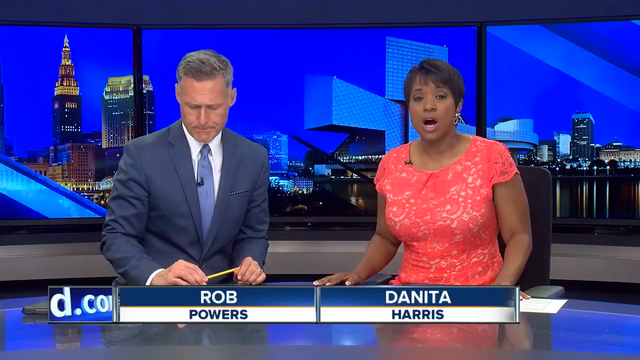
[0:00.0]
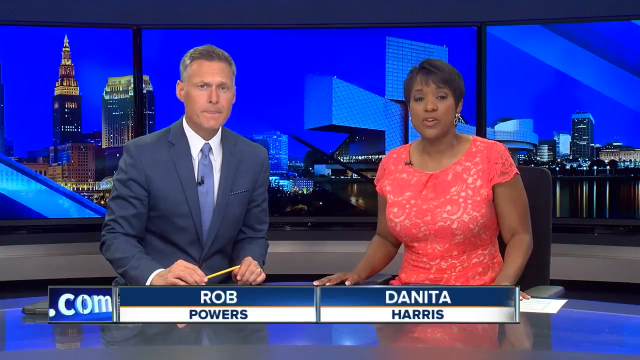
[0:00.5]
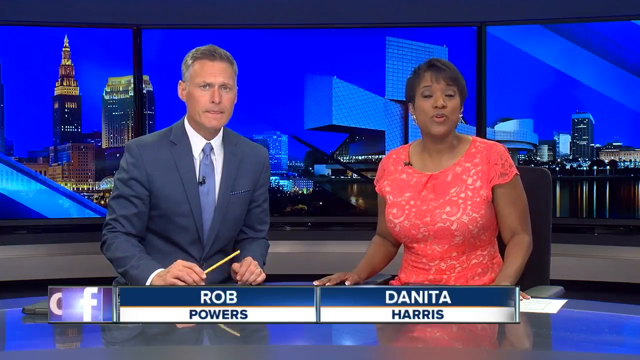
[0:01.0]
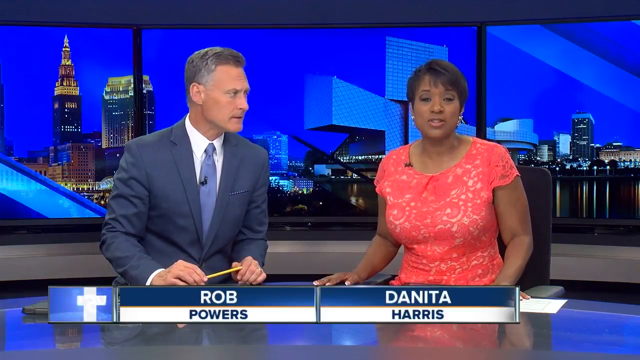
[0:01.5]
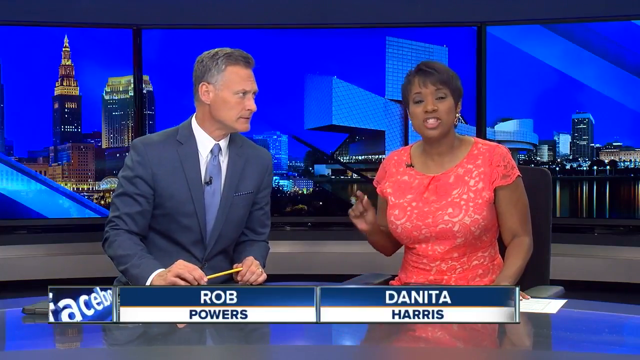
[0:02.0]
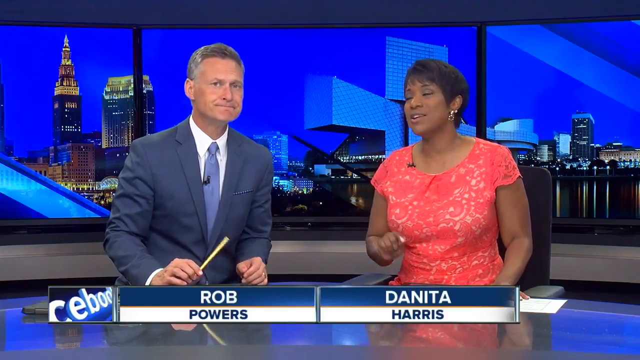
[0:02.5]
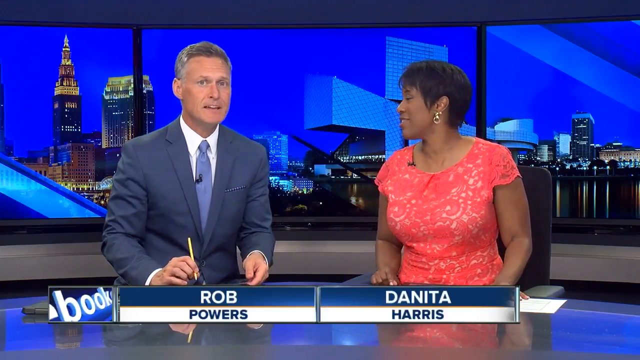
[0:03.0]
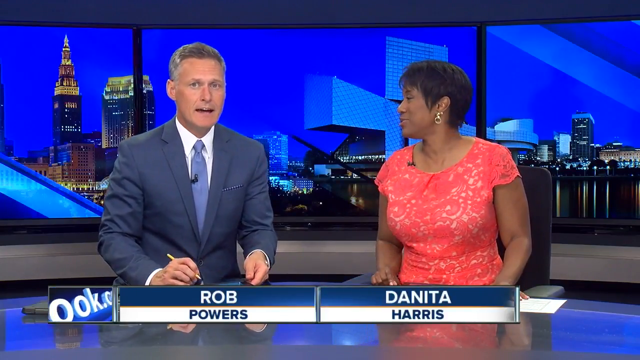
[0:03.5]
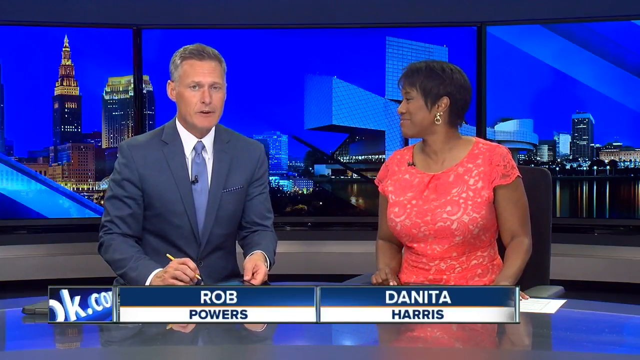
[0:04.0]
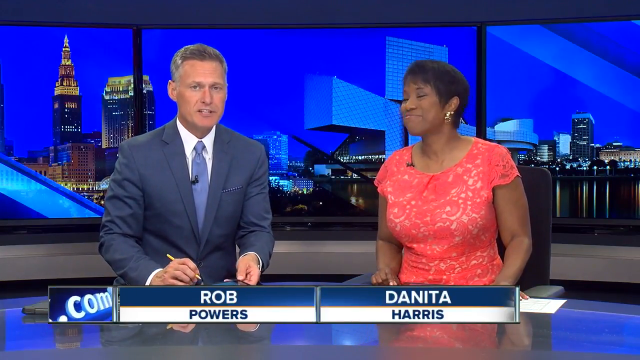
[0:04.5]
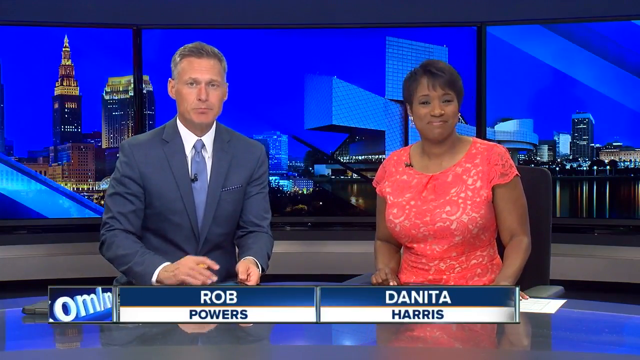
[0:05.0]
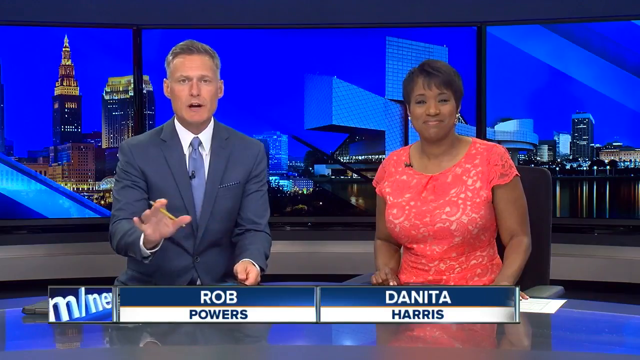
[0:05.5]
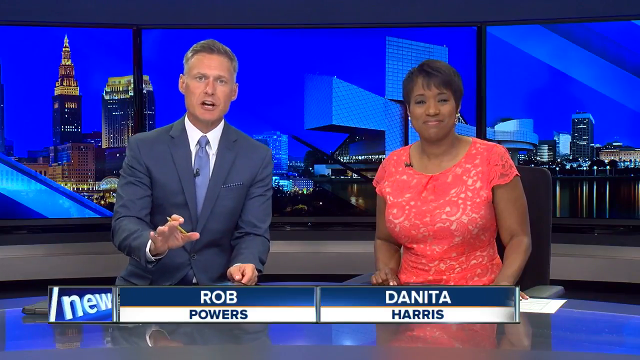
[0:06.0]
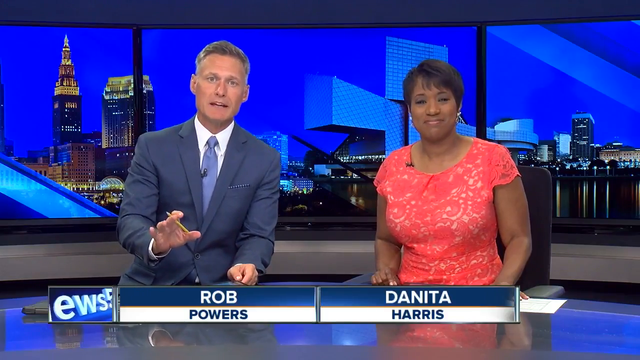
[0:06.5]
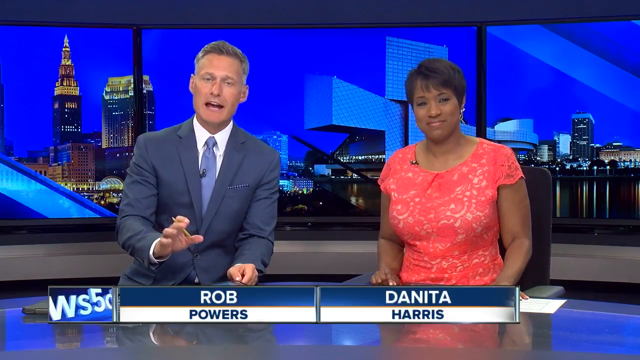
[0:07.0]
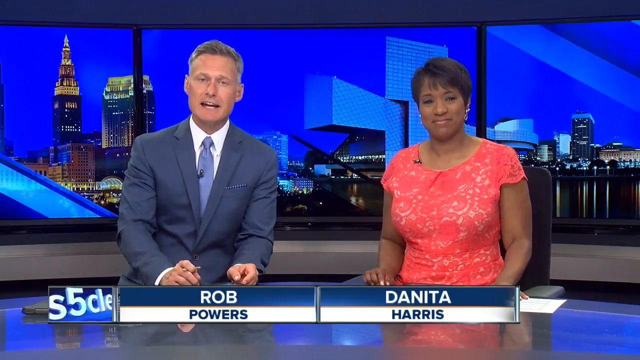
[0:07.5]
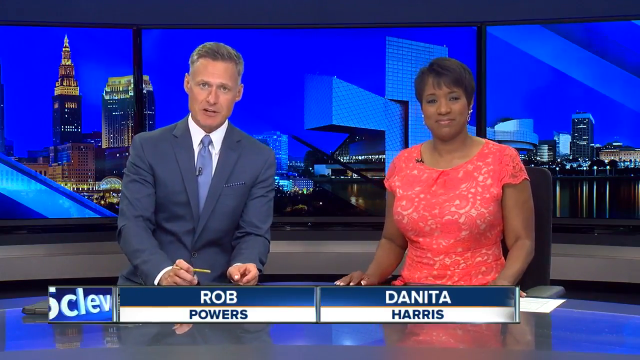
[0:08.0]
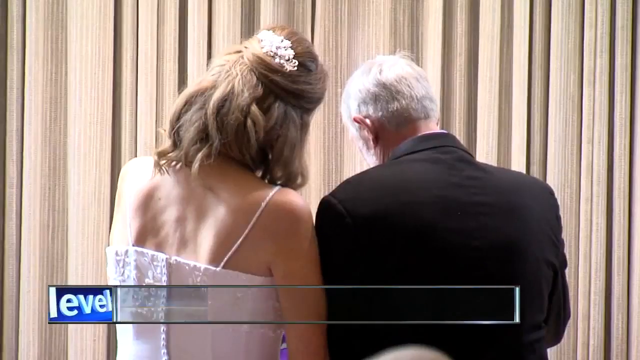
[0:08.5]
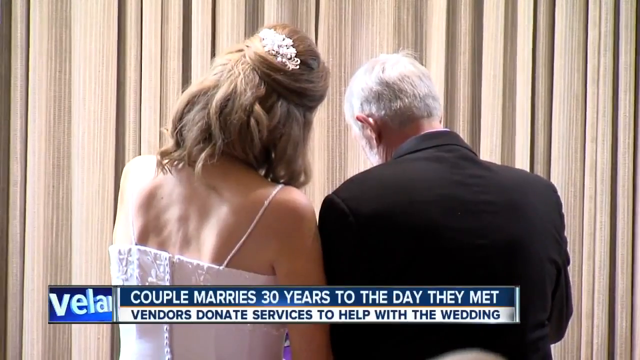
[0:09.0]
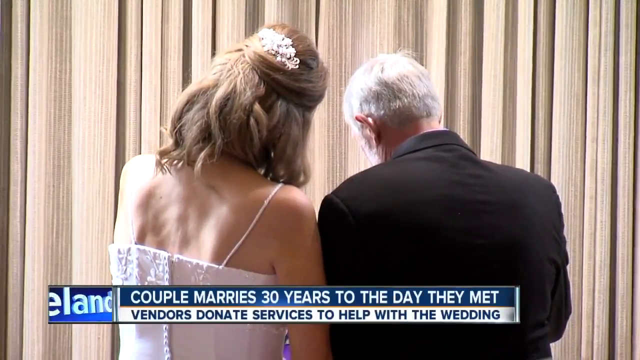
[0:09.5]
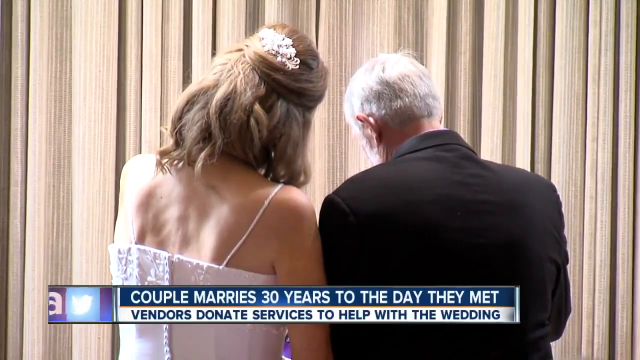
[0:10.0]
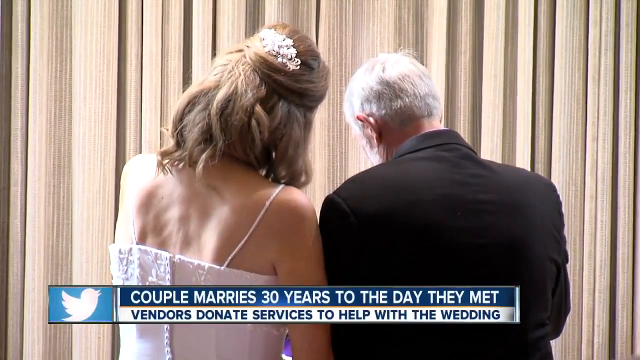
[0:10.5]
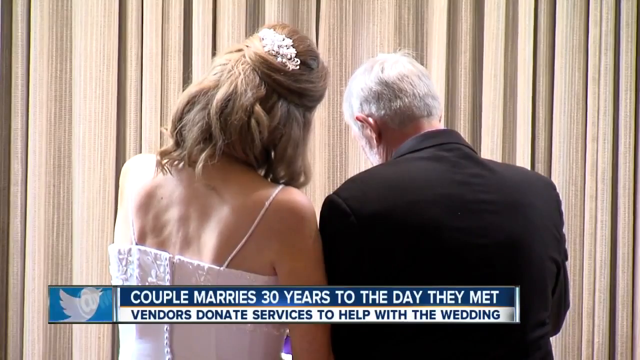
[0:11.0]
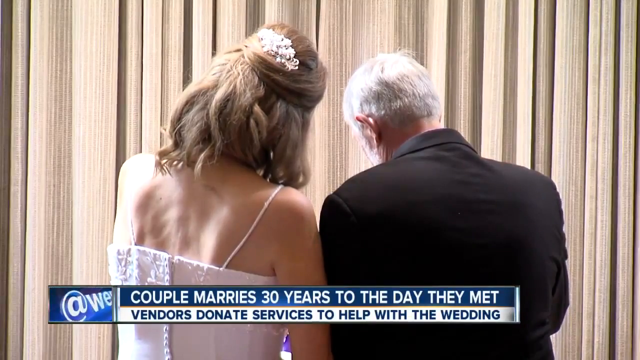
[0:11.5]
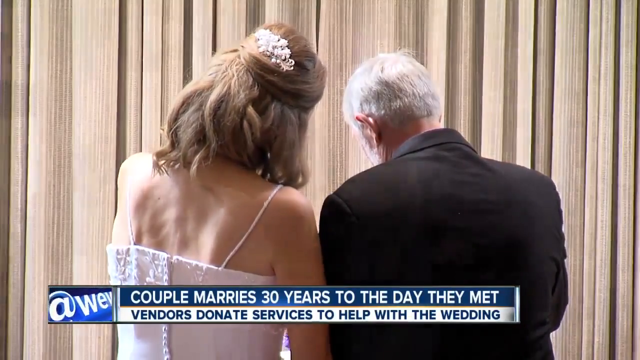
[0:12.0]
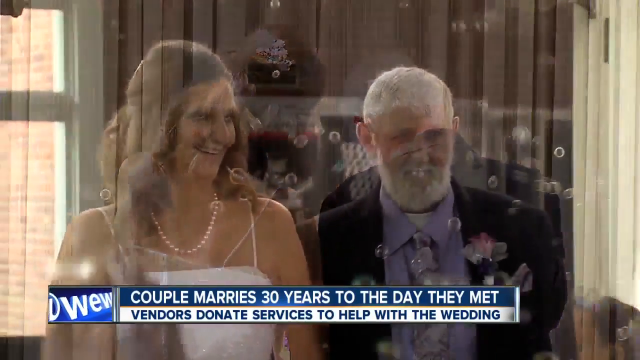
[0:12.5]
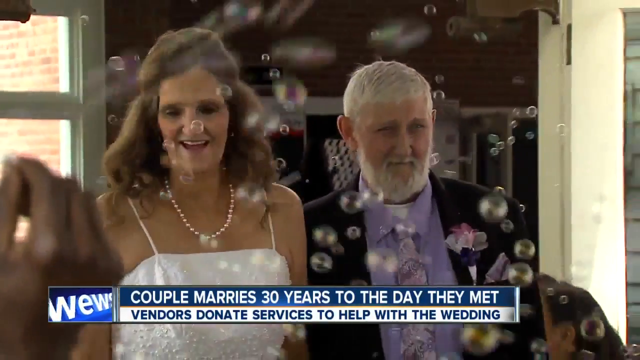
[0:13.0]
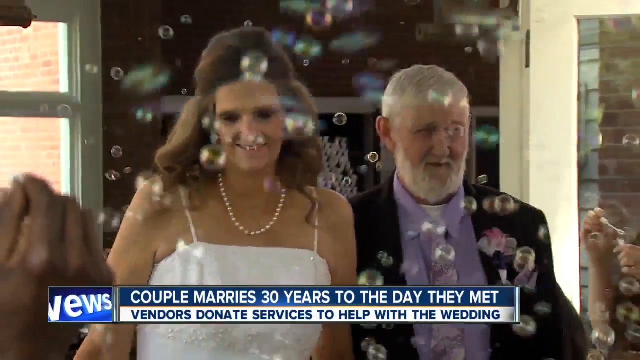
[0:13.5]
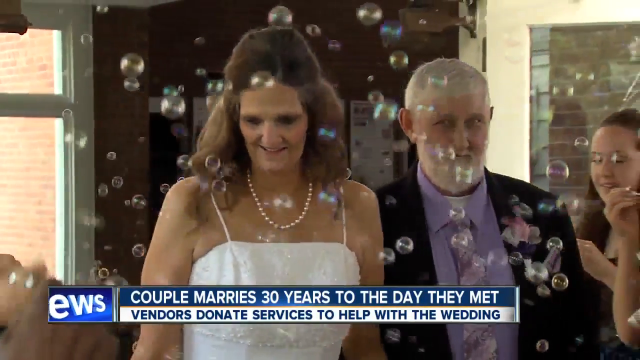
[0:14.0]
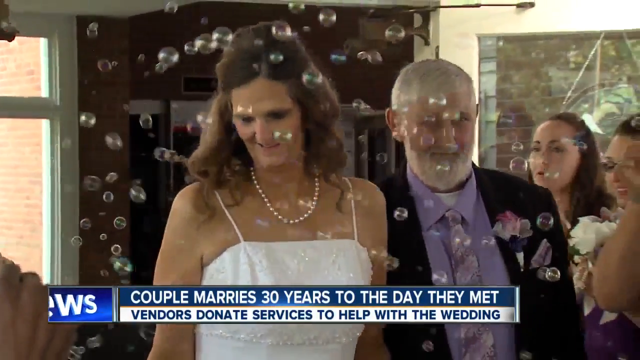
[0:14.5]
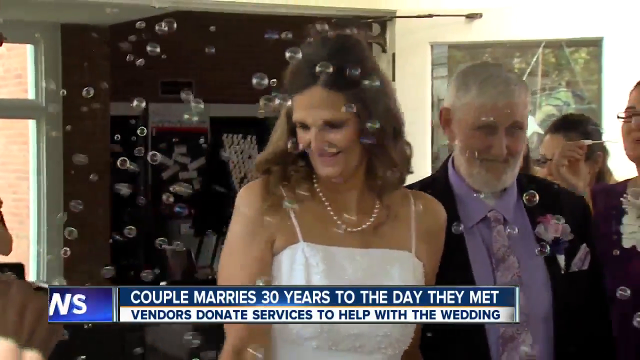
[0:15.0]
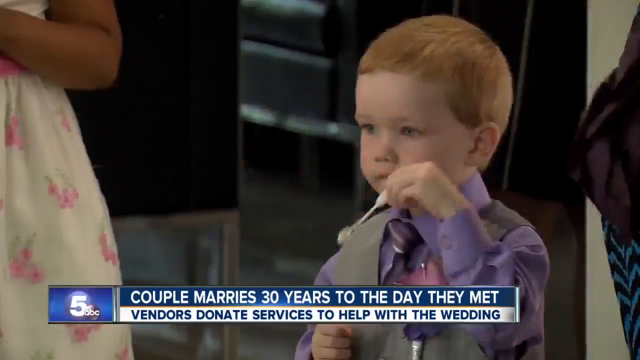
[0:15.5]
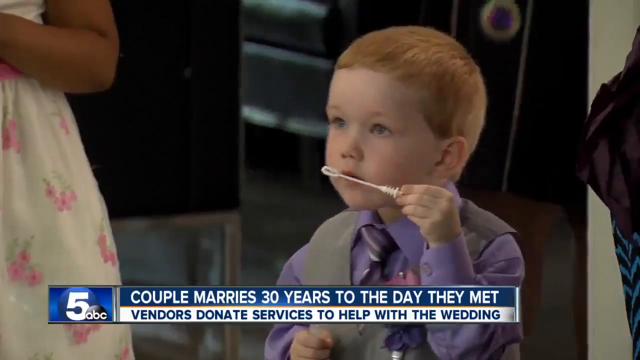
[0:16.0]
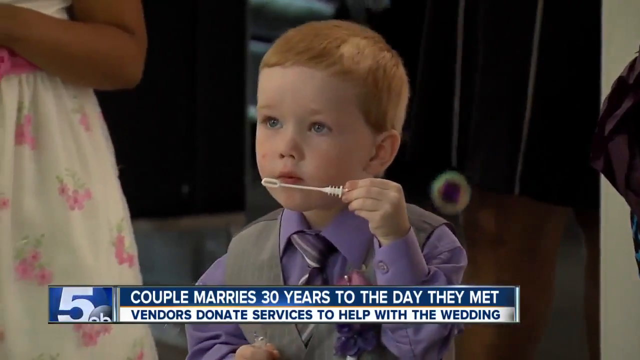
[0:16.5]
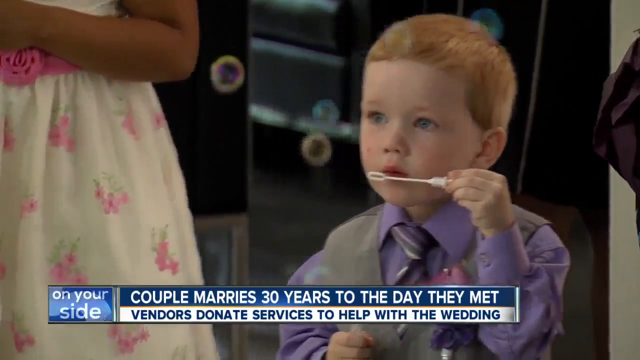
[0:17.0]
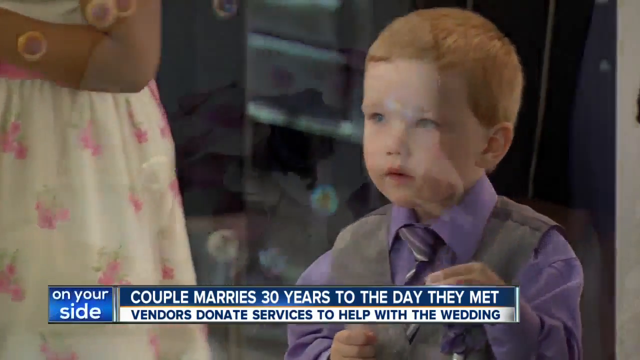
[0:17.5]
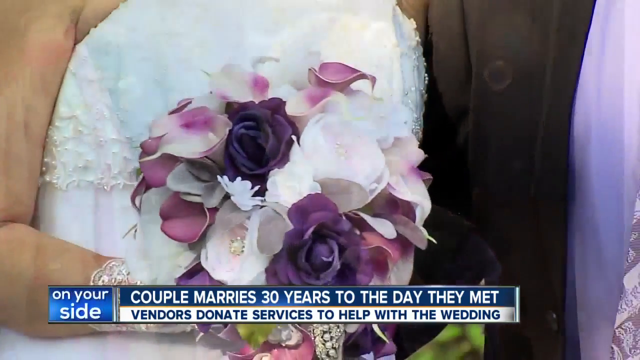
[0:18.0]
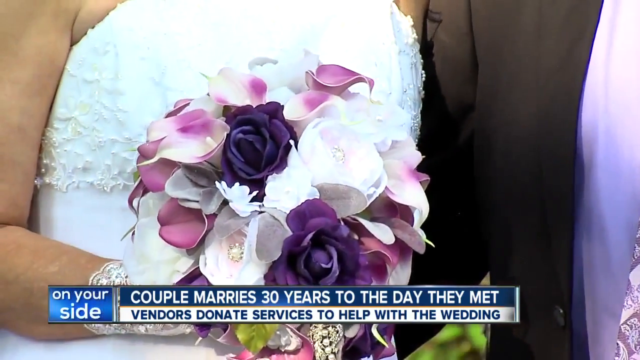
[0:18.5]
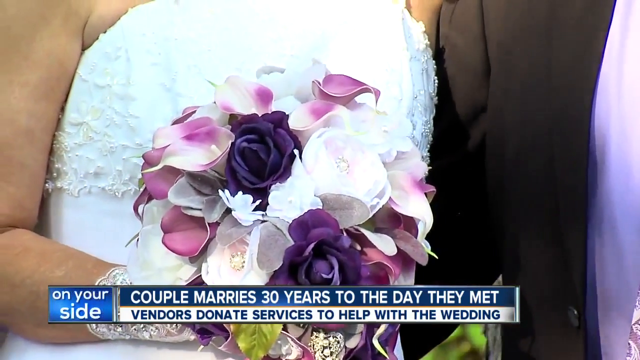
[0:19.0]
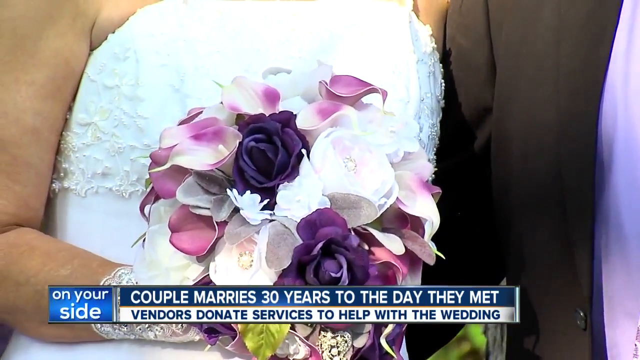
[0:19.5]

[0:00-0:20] The video opens with two media personalities, Rob Powers and Danita Harris. Danita Harris wears an orange outfit, and Rob Powers is in a blue suit. On-screen text reads "couple marries 30 years to the day they met." A husband and wife are shown, and they are being asked to sign together. Text states that vendors donate to help with the wedding.